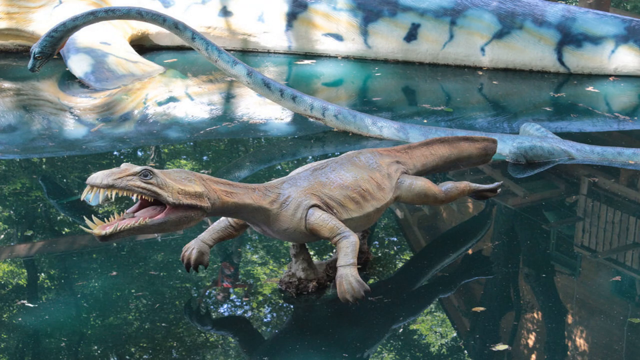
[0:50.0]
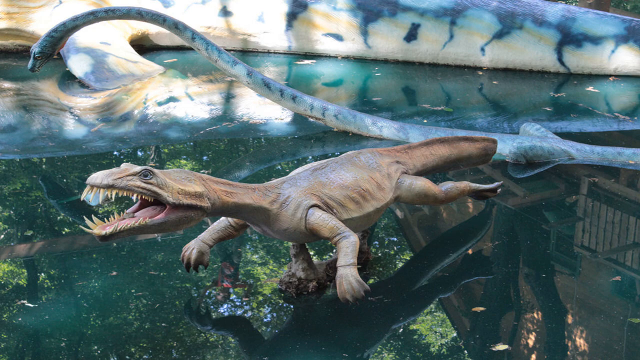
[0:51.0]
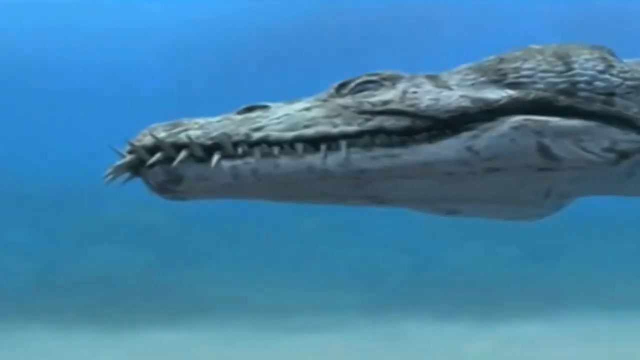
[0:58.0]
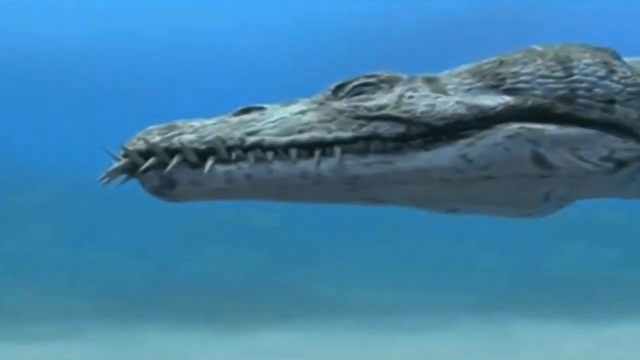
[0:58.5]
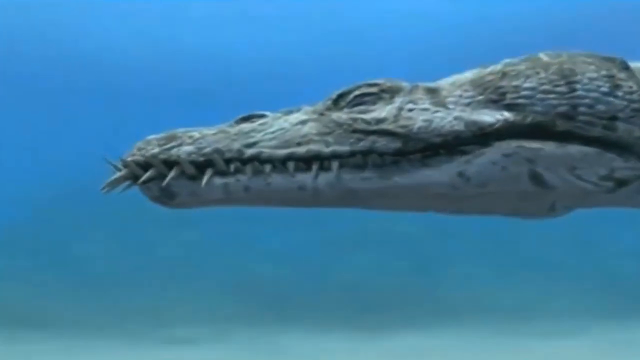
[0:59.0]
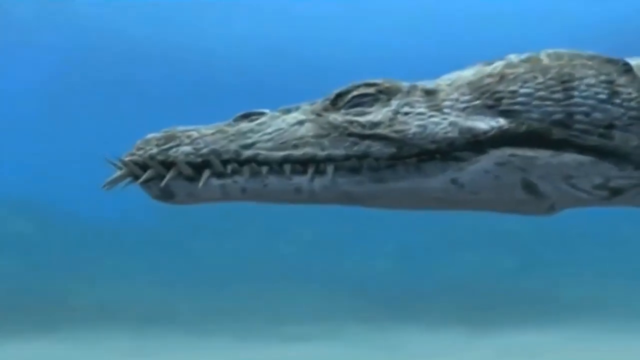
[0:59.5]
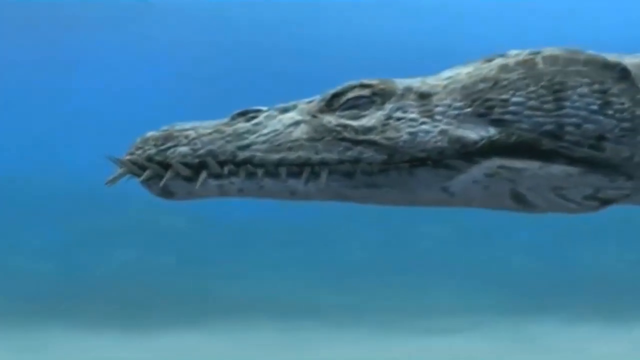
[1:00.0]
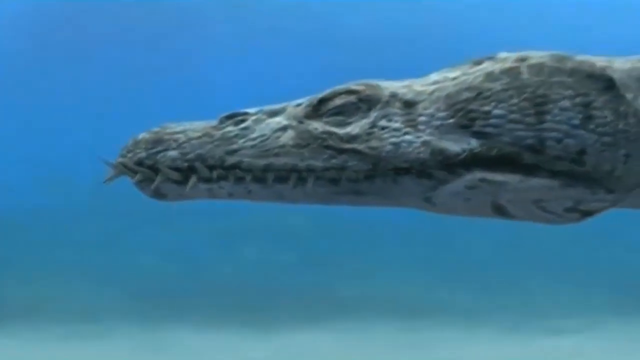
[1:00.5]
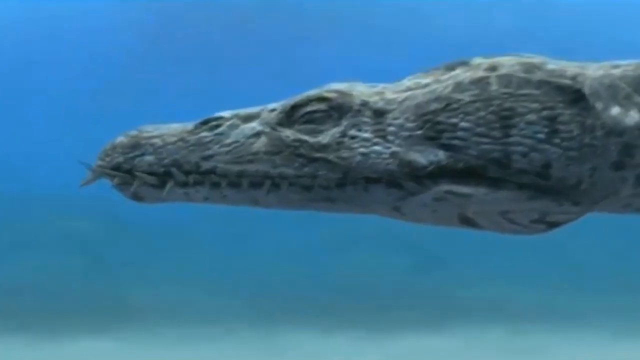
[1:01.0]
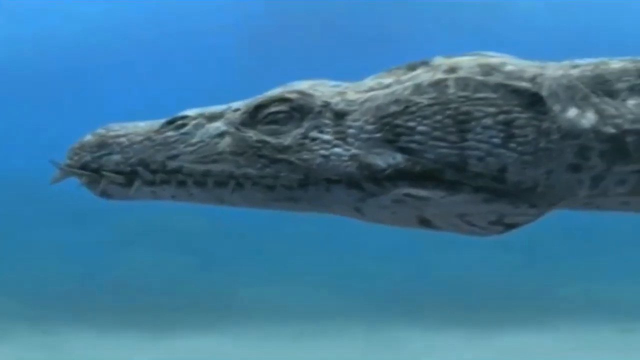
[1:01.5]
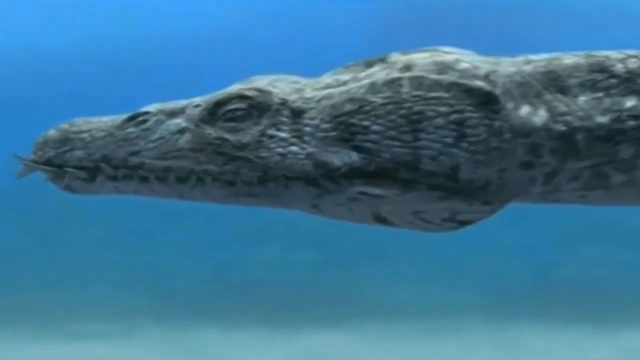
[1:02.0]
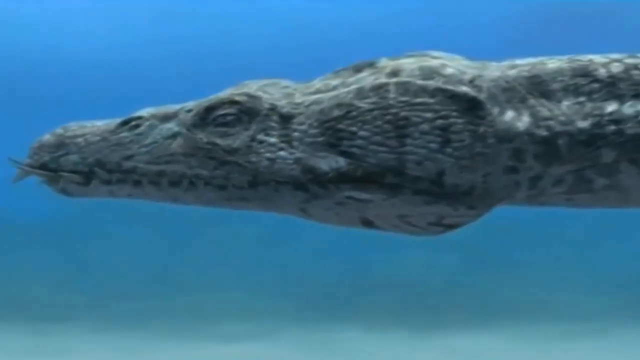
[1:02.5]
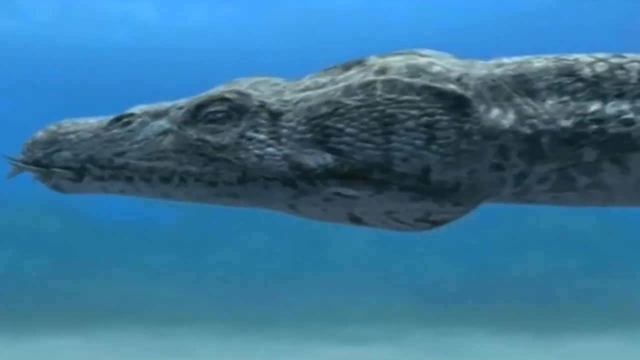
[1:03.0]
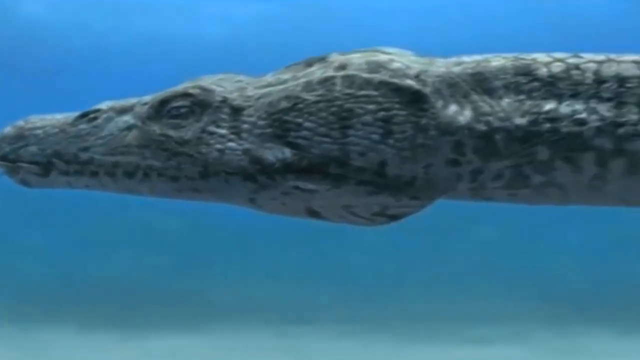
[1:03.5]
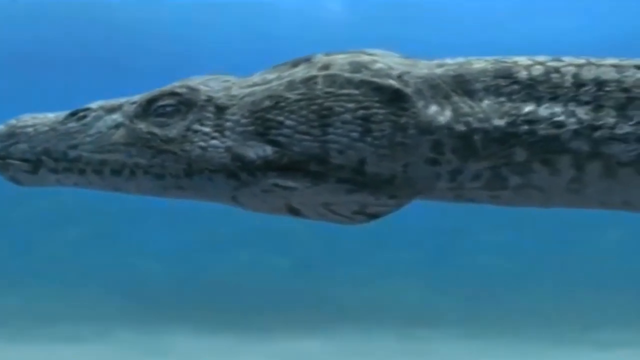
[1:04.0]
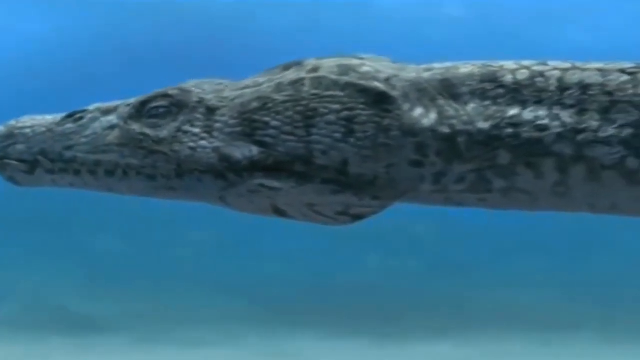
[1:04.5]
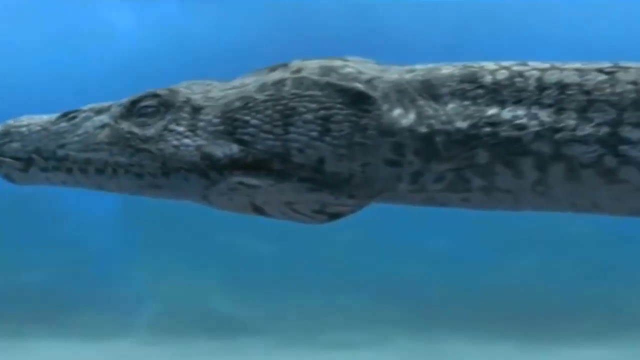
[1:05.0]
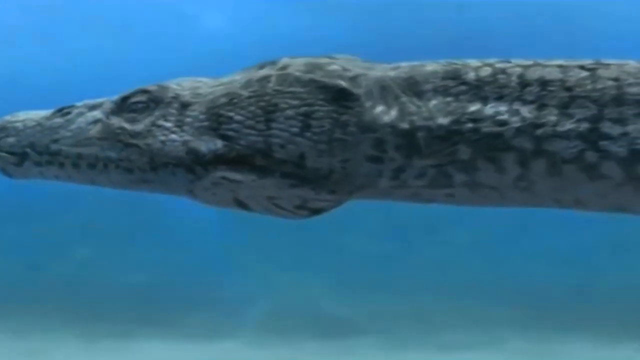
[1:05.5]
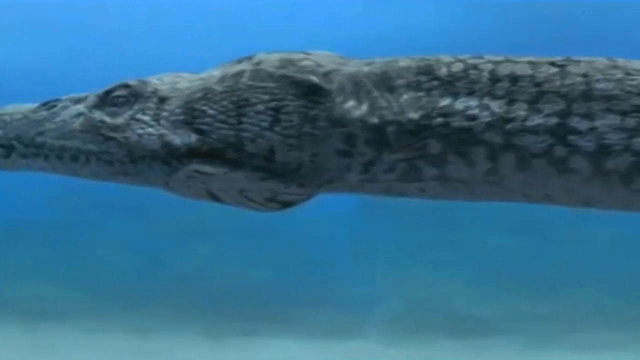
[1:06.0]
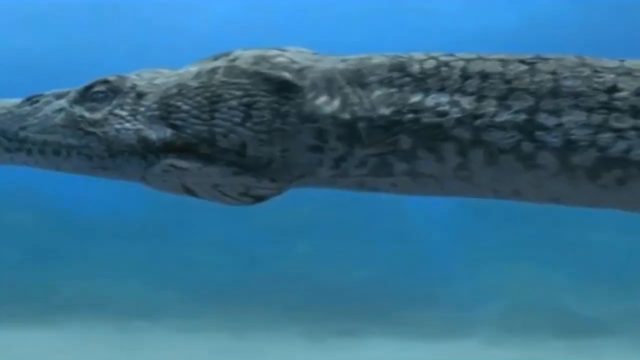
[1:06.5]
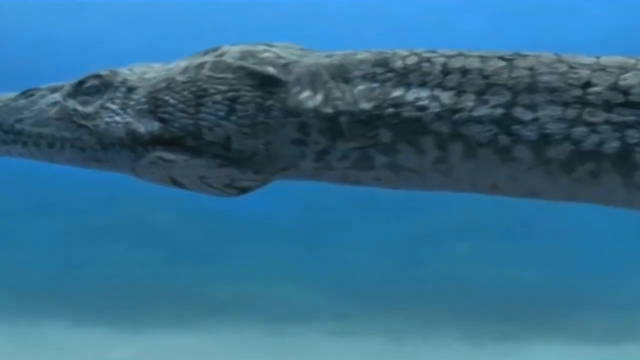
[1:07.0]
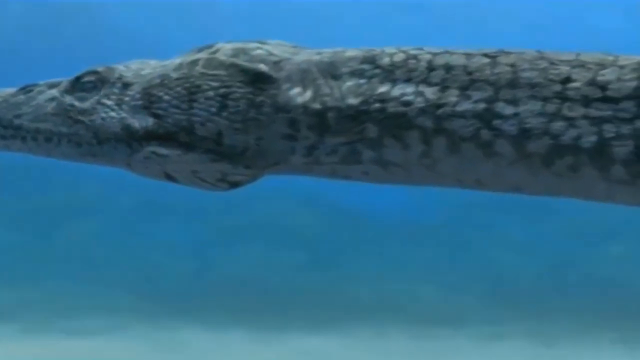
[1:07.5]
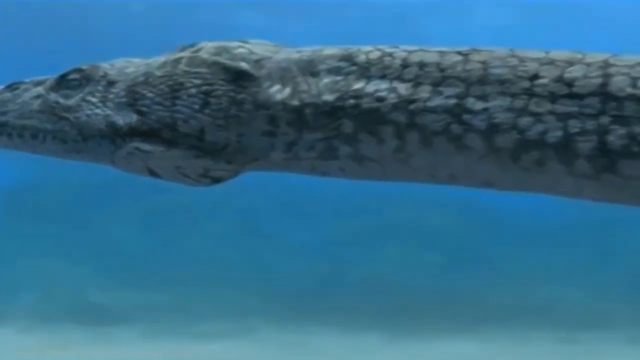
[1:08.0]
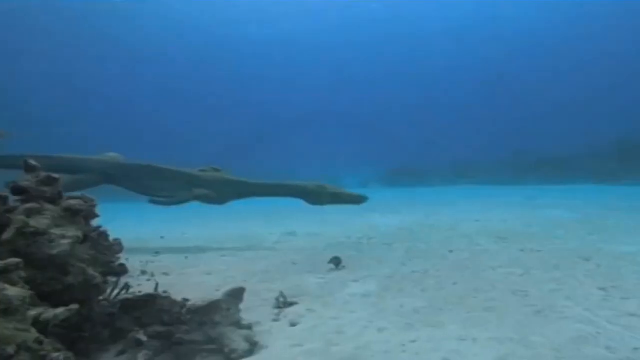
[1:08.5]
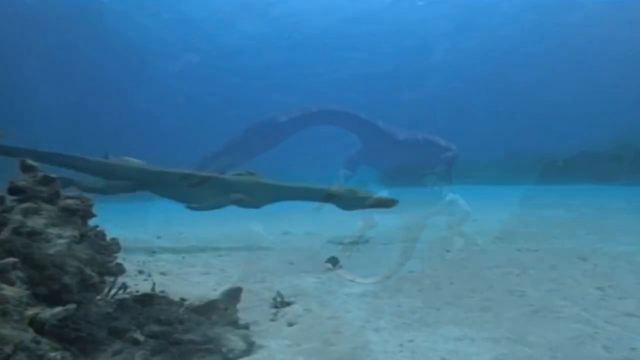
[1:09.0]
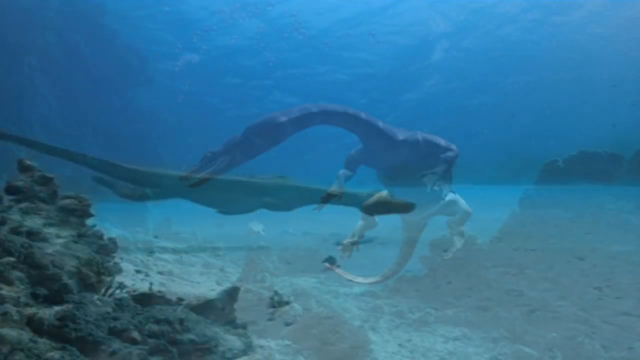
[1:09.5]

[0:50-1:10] A creature that kind of looks like a very large lizard appears, with four legs, a very long tail, and a head that almost looks like a snake's or an alligator's. Its eyes are on top, a tongue is visible inside its mouth, and its neck is very long. The creature swims in the water, and in the background there is almost another dinosaur that looks almost like a long eel. This is a picture drawn by an artist, and then an animated digital view shows what the creature could look like swimming under the water. Its top teeth jut down through the bottom teeth, making it look very spiky. It looks like it has a very wide neck or cheek area, then a very long neck, almost like a giraffe's, and it also looks like it has a very long tail.